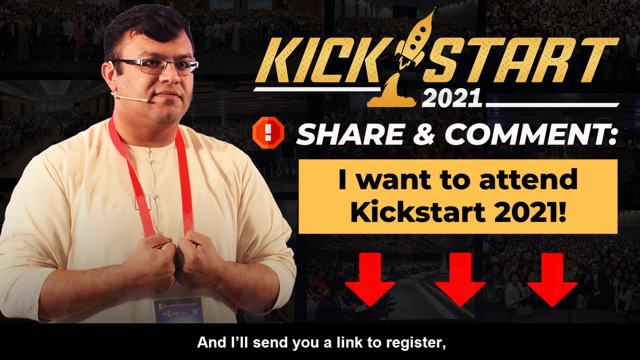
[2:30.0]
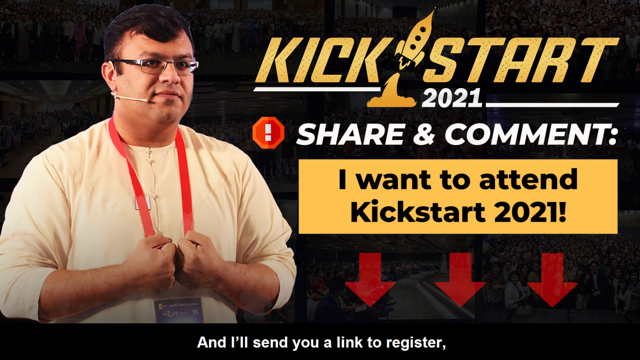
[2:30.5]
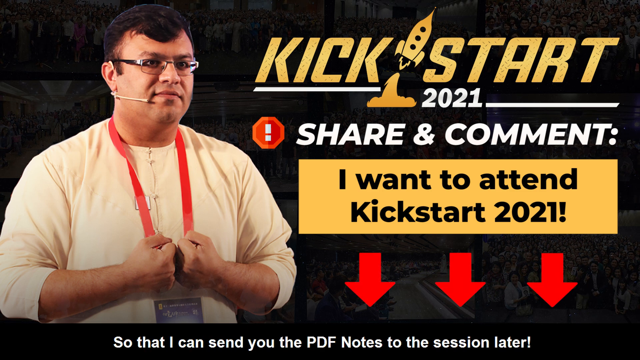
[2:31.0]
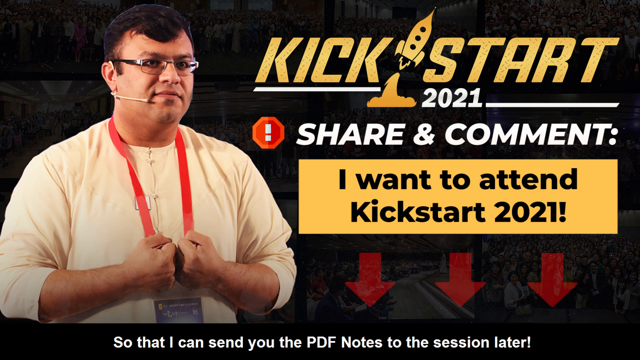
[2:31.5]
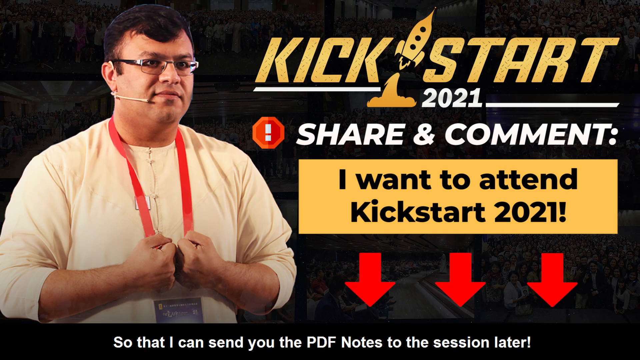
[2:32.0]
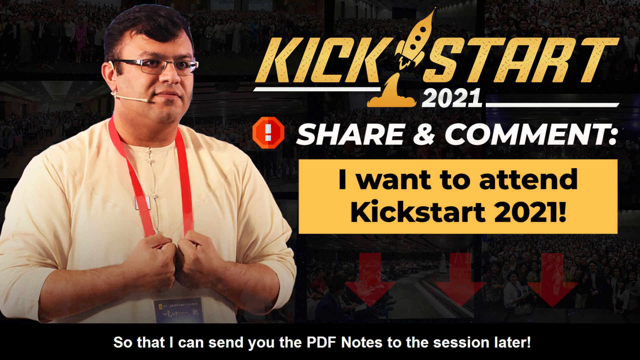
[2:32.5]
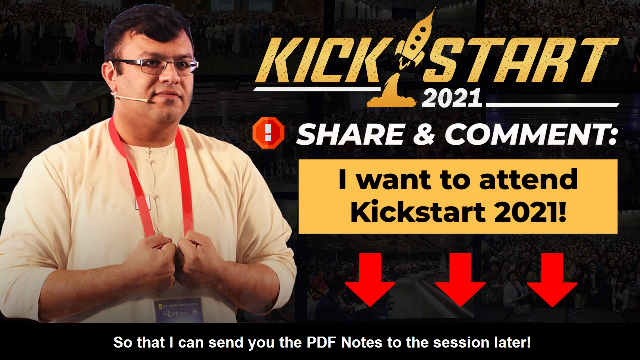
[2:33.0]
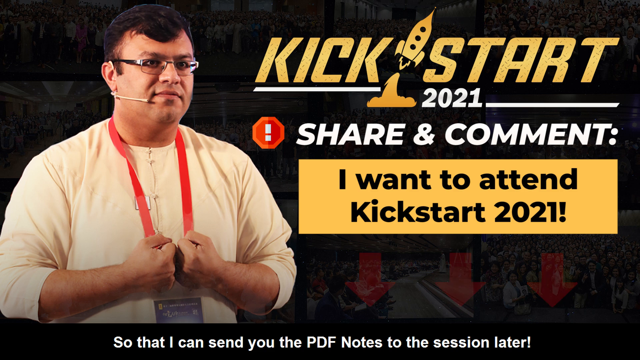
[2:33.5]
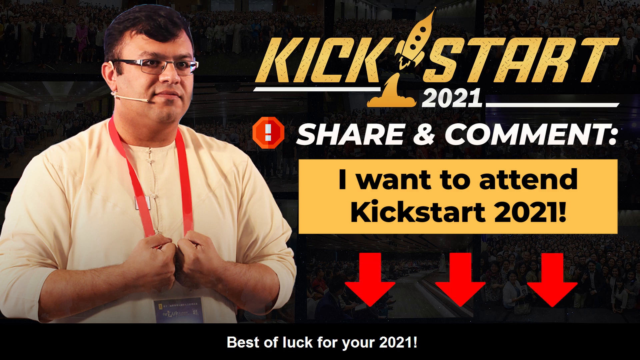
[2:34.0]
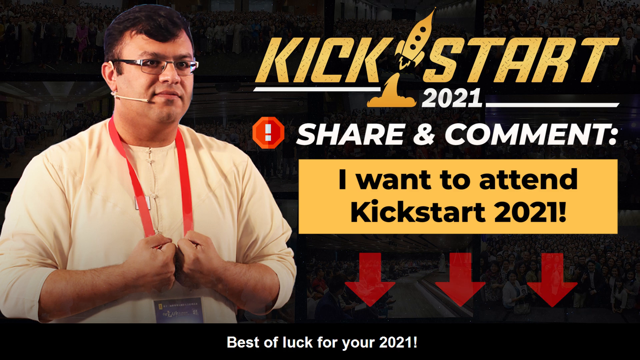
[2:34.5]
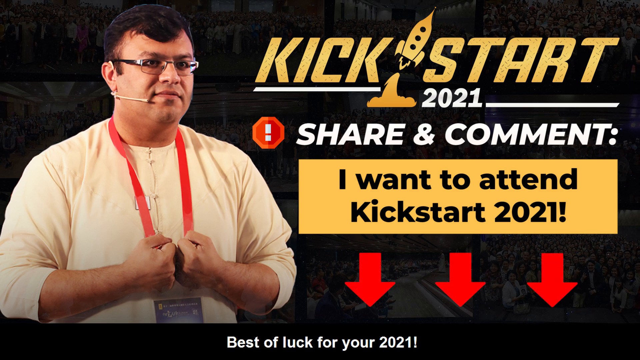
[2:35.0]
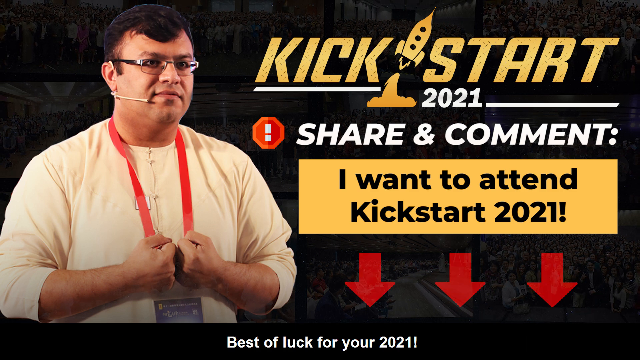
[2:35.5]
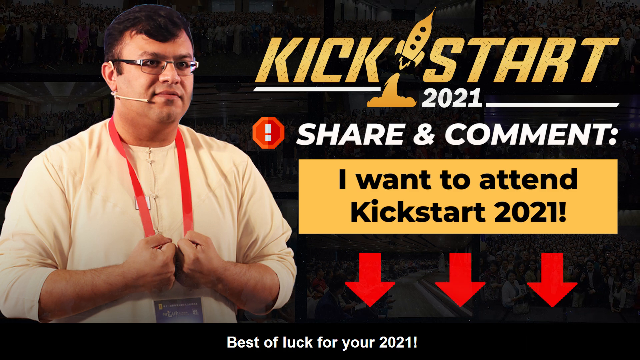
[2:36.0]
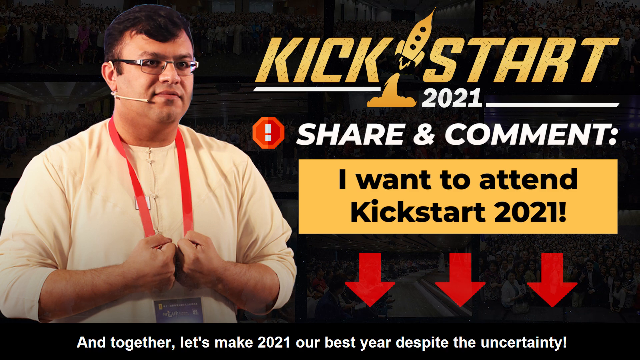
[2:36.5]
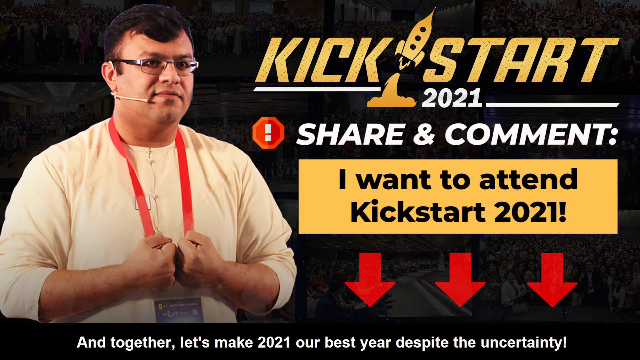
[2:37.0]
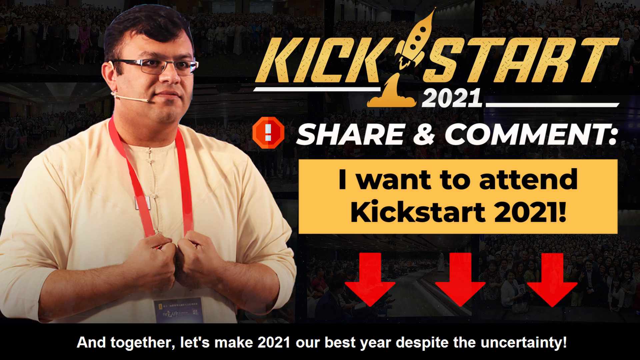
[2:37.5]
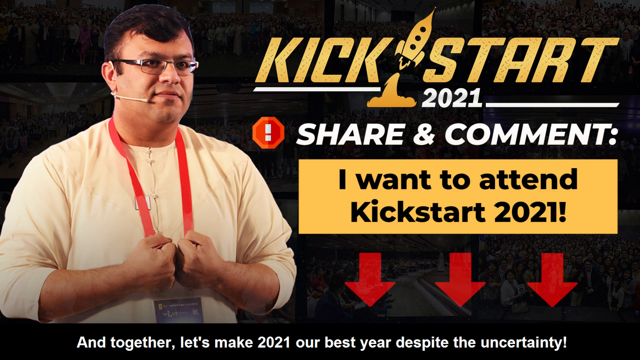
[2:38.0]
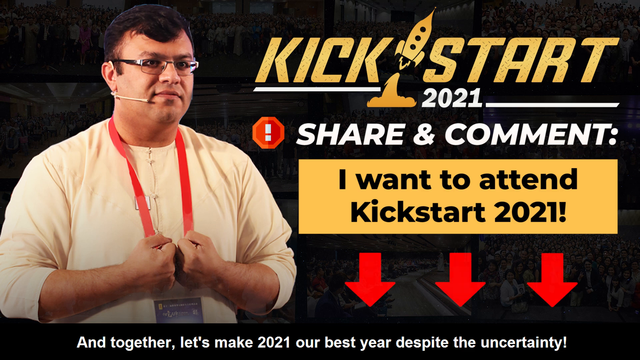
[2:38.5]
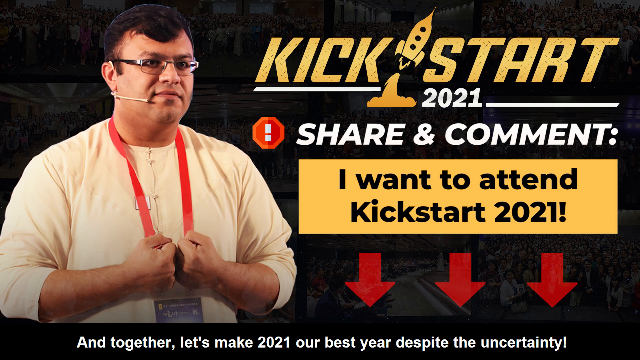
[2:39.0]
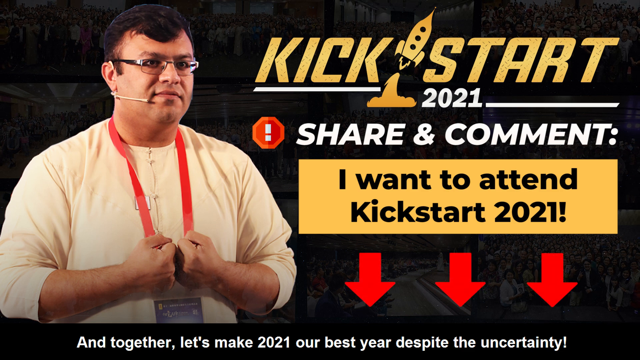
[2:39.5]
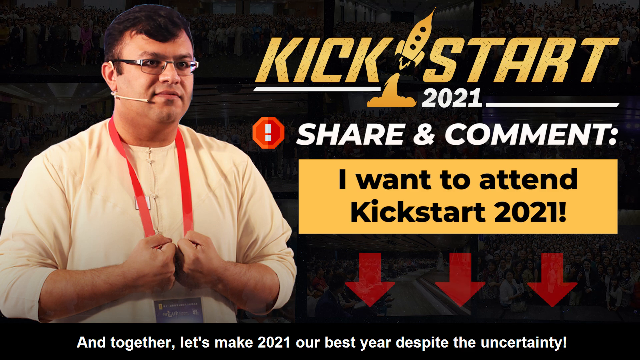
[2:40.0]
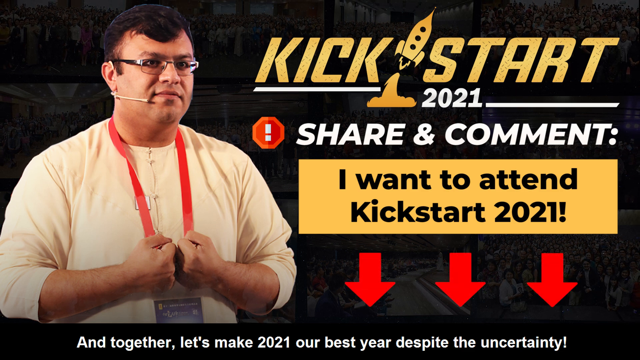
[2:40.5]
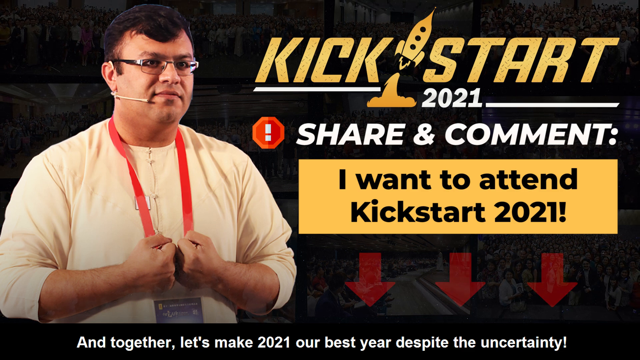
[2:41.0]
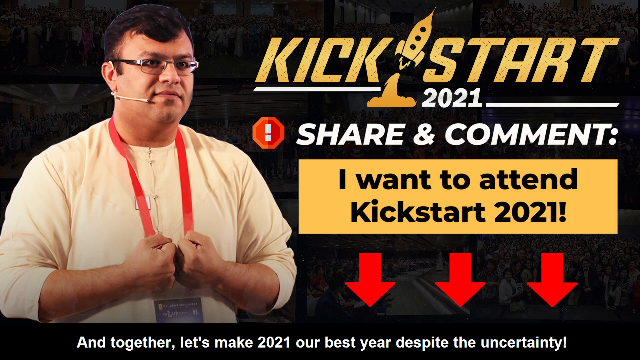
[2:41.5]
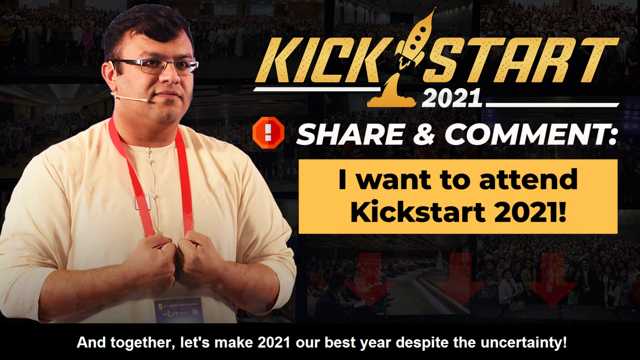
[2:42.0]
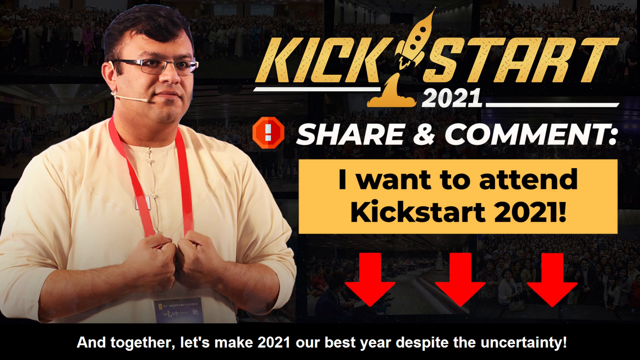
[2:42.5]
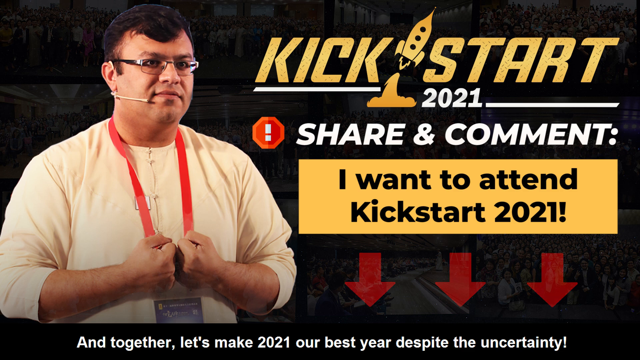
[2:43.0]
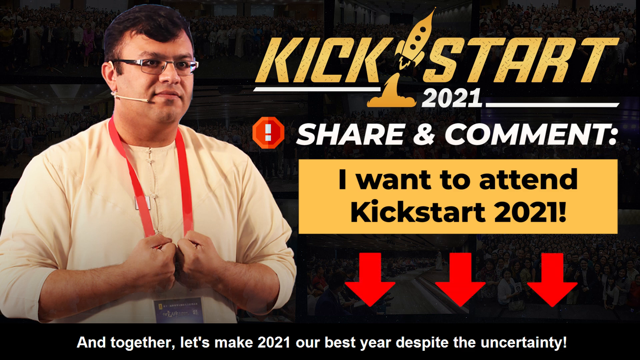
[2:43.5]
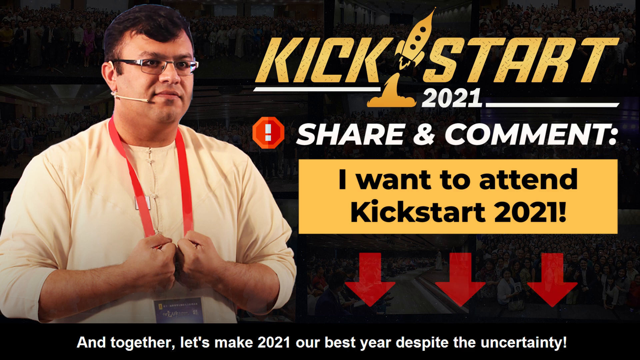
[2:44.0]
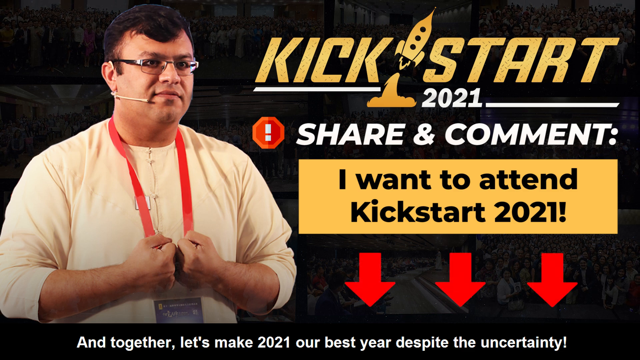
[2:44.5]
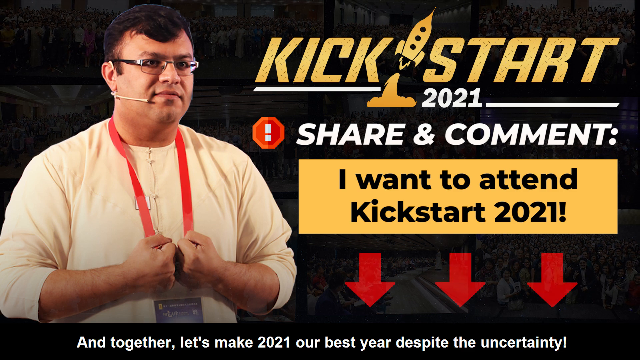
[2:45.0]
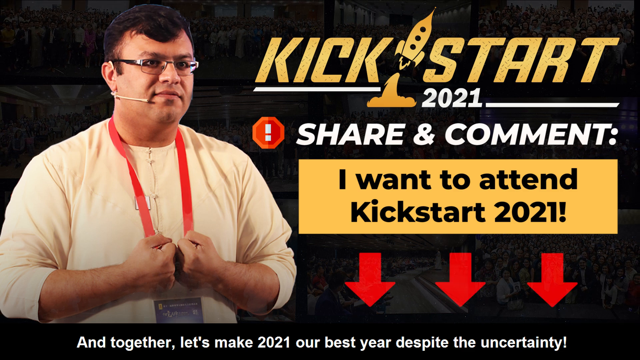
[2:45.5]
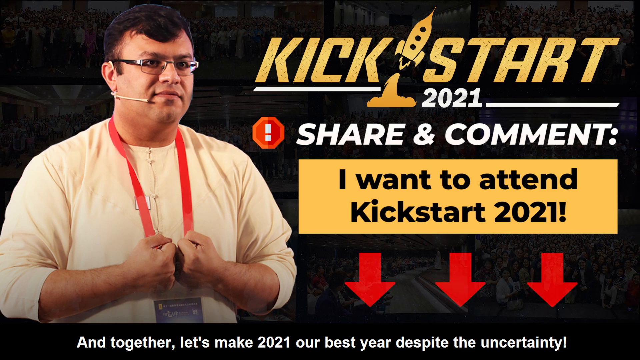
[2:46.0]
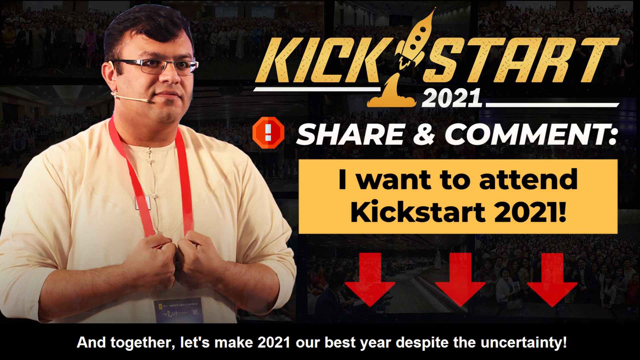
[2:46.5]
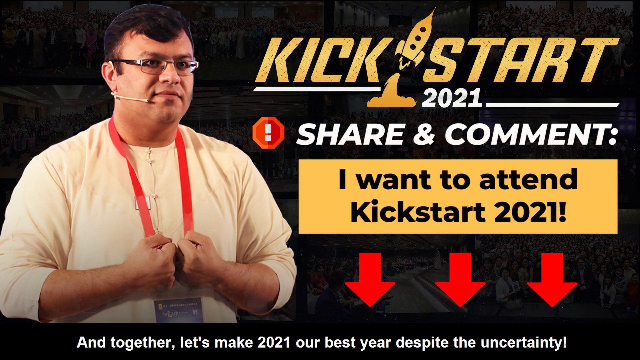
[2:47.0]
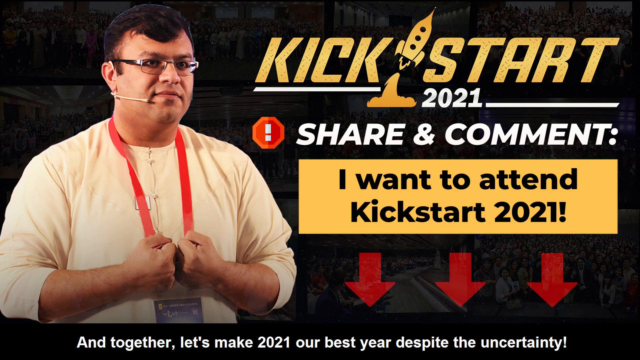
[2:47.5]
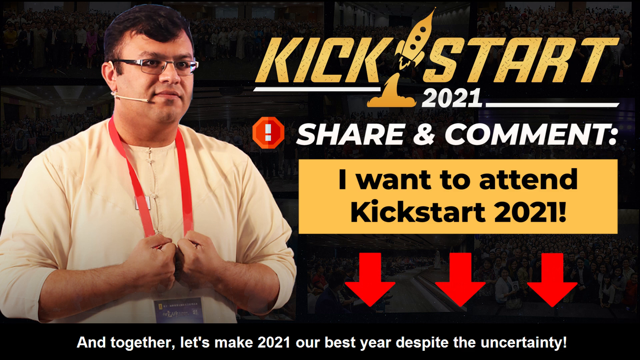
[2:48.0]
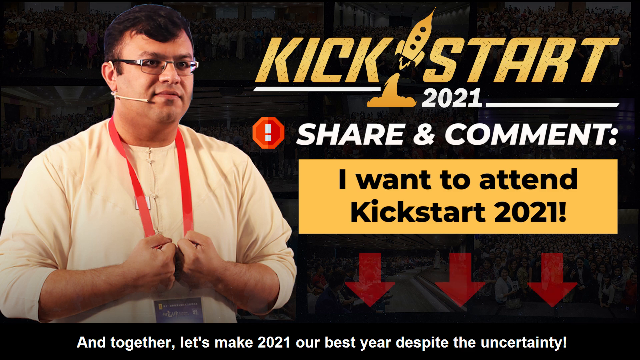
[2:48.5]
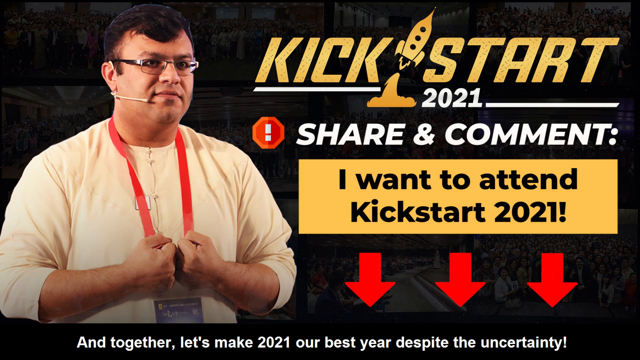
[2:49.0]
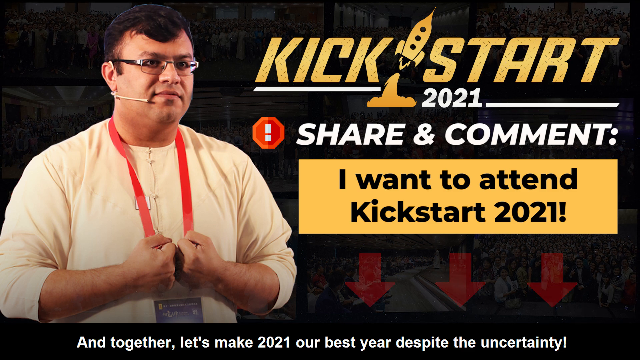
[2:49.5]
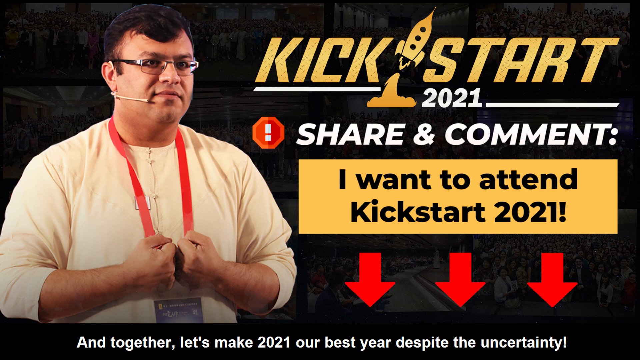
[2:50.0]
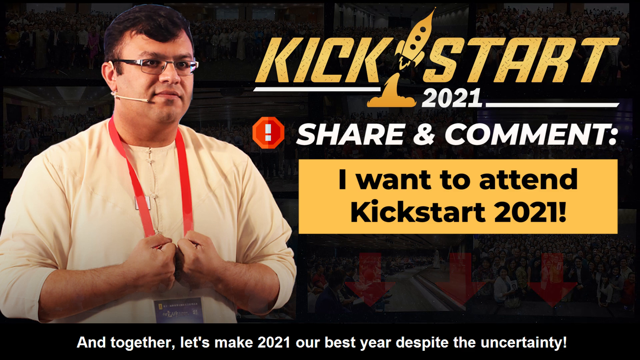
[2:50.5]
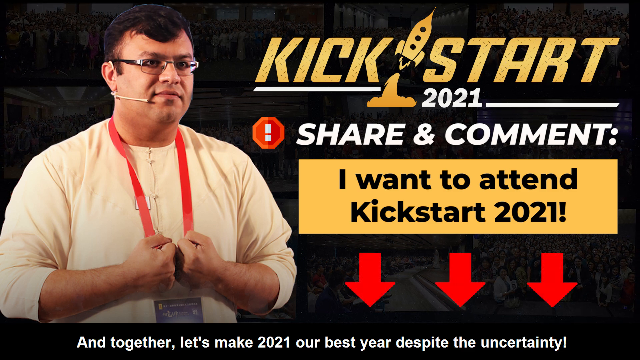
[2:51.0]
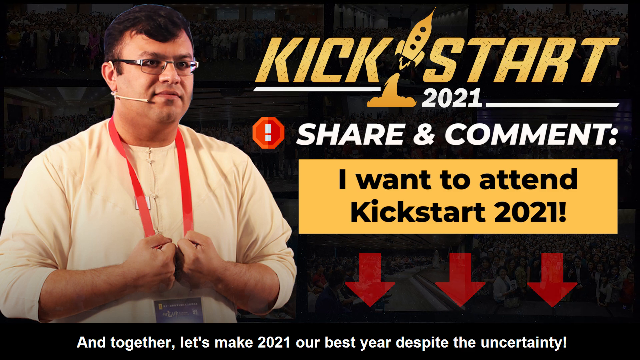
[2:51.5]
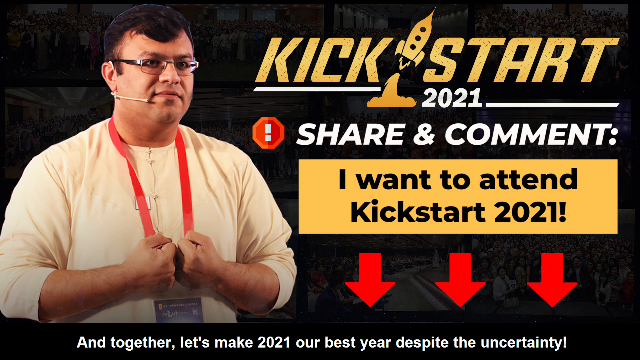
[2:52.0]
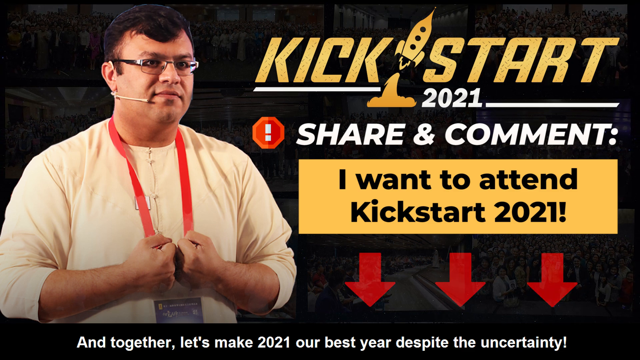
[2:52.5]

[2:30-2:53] The man is on the left-hand side, wearing glasses, a short-sleeved light yellow shirt, and a red lanyard around his neck with some type of badge at the end. A microphone wraps around his right ear and comes down toward his mouth. The caption reads "Kickstart 2021, share and comment" and "I want to attend Kickstart 2021." To the left of the word "share" is a red stop-sign symbol with an exclamation mark inside it. Under the "I want to attend Kickstart 2021" box, three red arrows point down and blink. The picture and information do not change. Text at the bottom mentions sending PDF notes and making 2021 the best year ever.